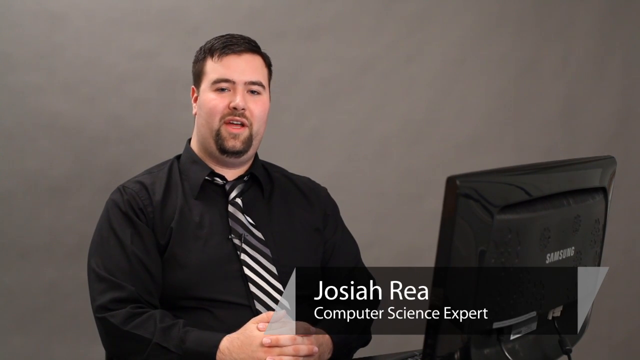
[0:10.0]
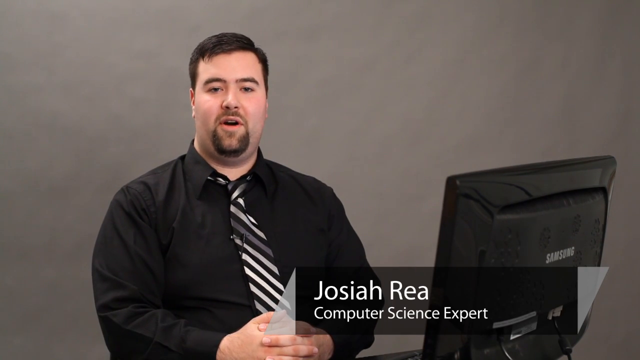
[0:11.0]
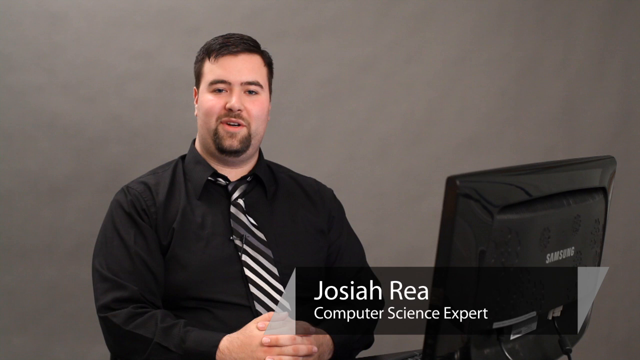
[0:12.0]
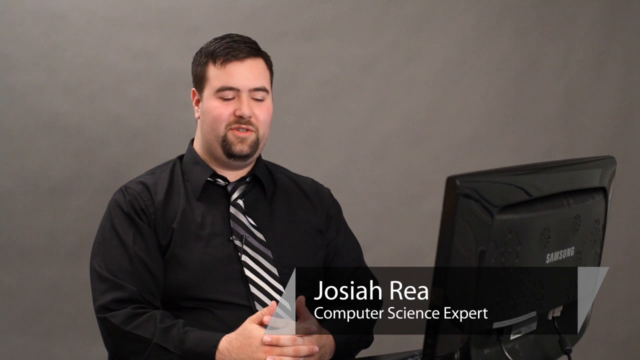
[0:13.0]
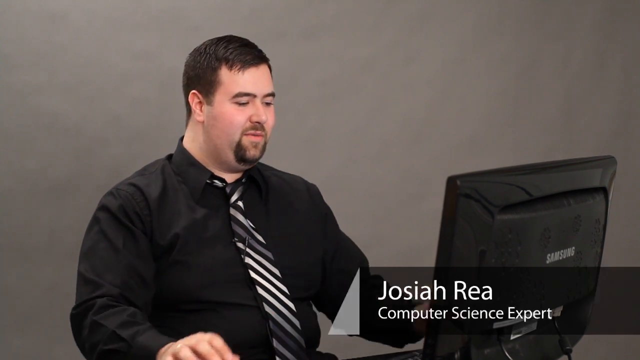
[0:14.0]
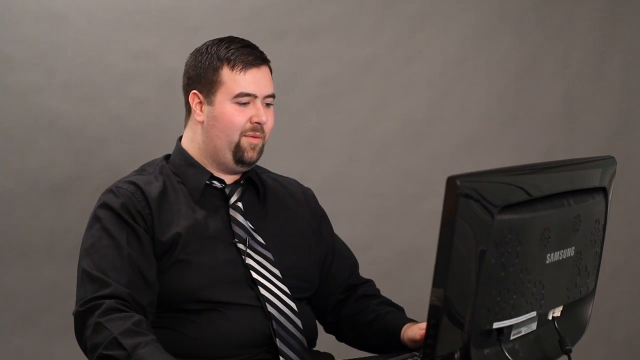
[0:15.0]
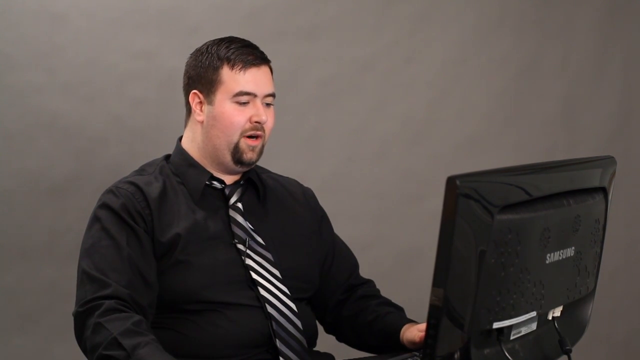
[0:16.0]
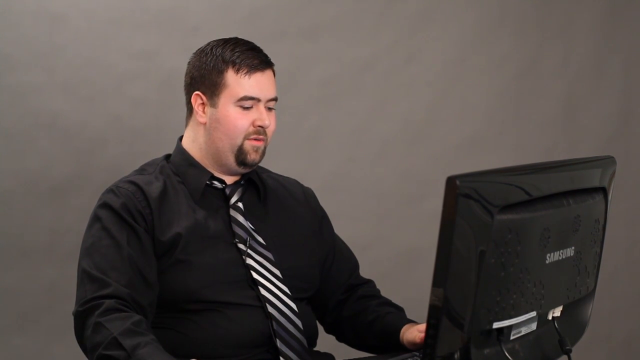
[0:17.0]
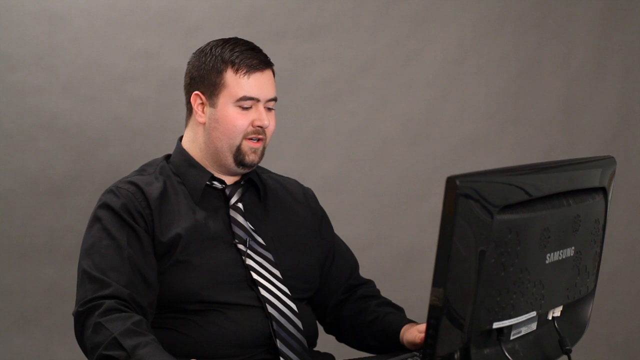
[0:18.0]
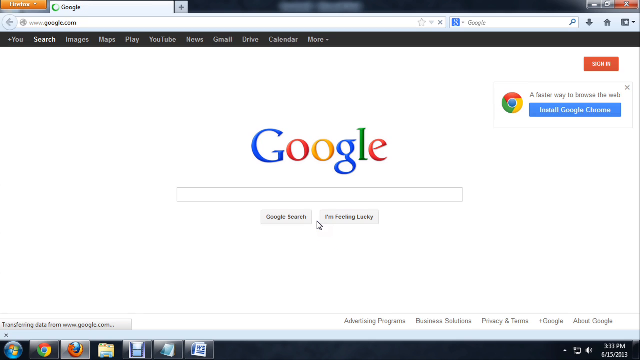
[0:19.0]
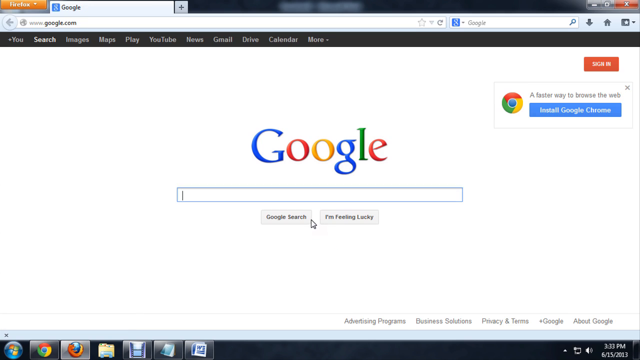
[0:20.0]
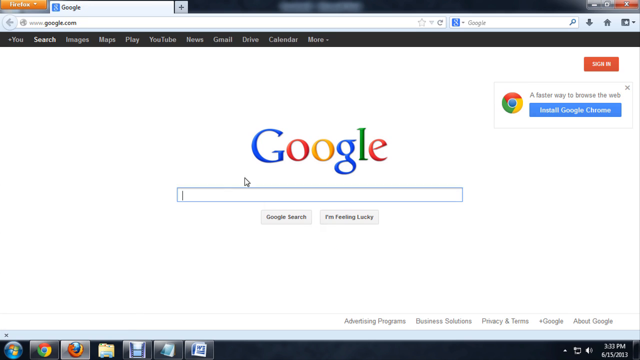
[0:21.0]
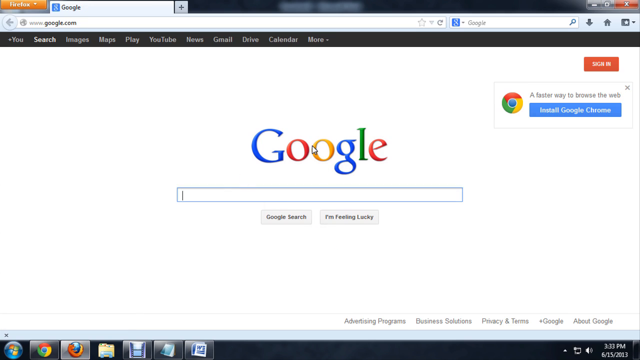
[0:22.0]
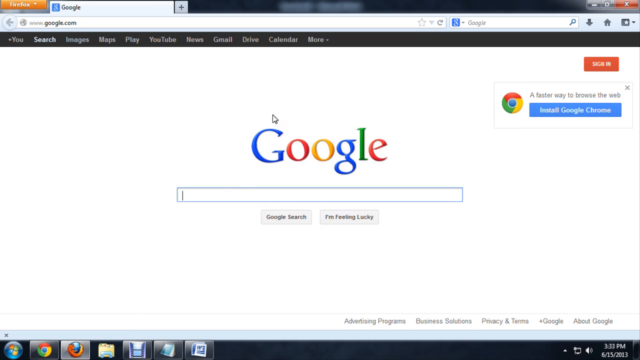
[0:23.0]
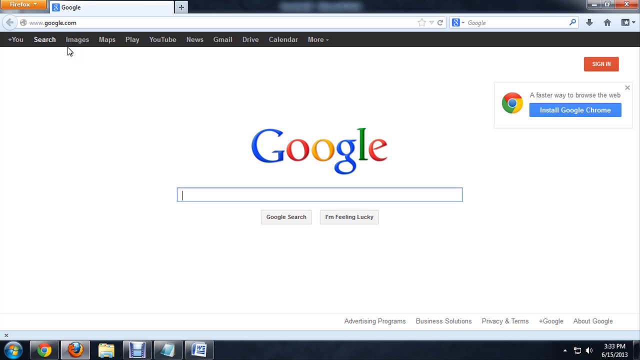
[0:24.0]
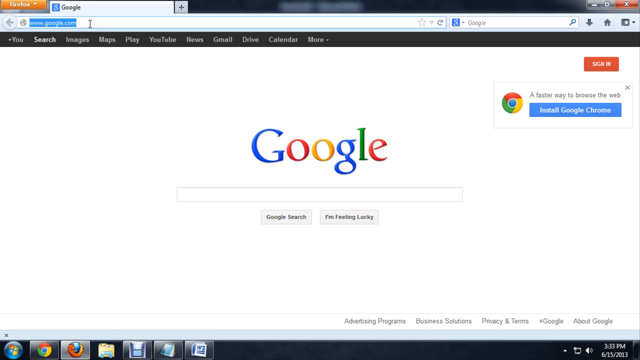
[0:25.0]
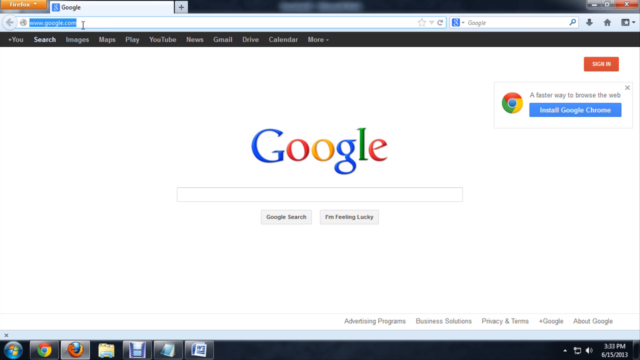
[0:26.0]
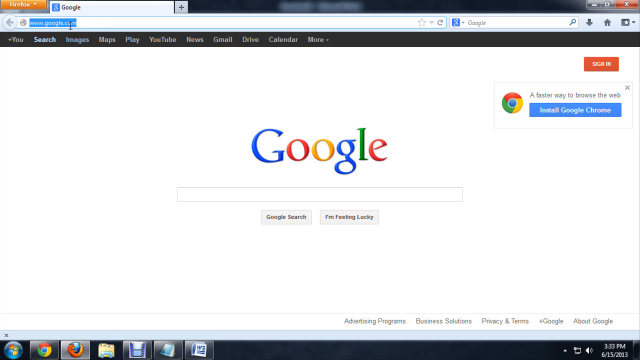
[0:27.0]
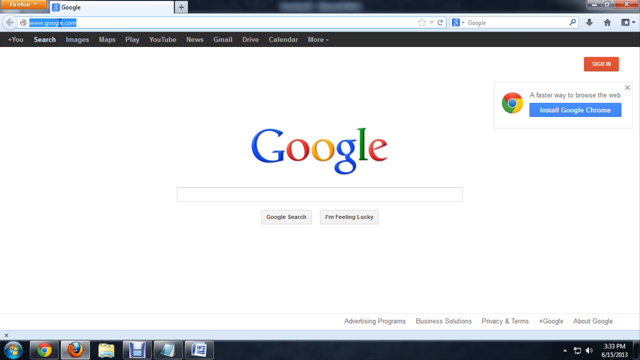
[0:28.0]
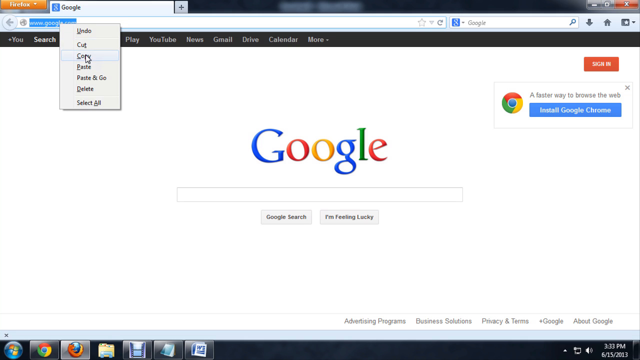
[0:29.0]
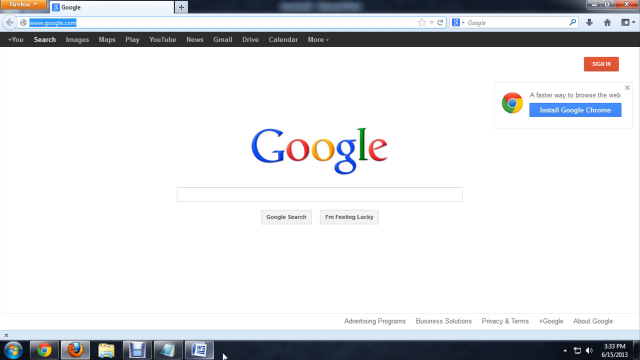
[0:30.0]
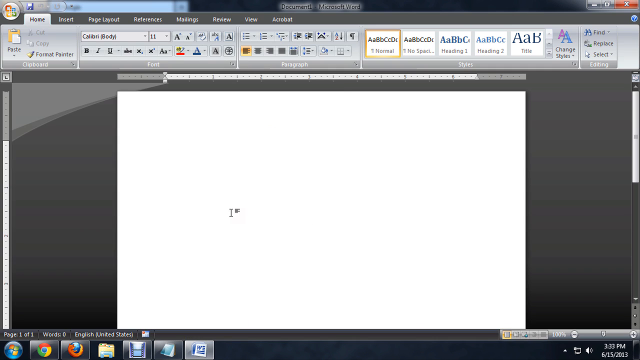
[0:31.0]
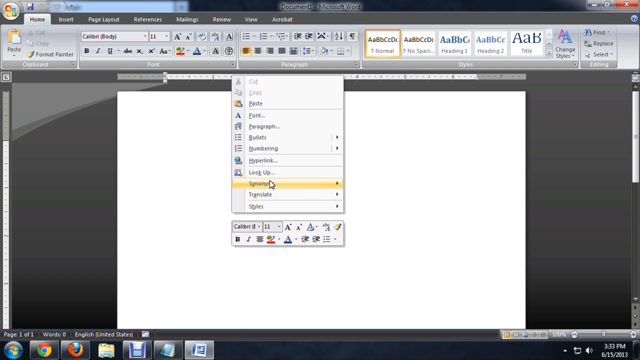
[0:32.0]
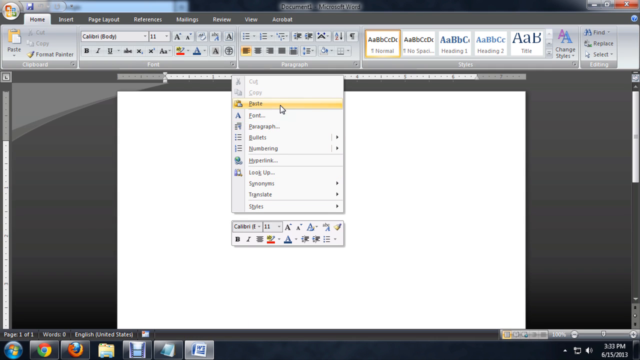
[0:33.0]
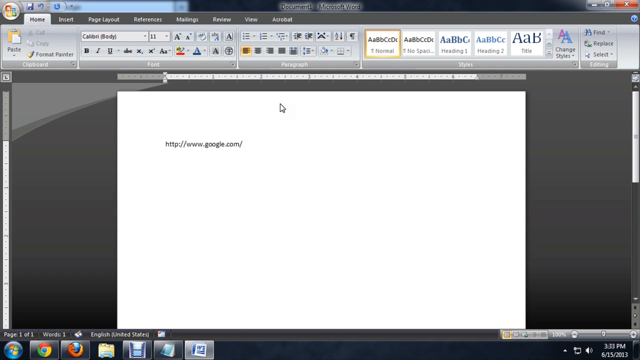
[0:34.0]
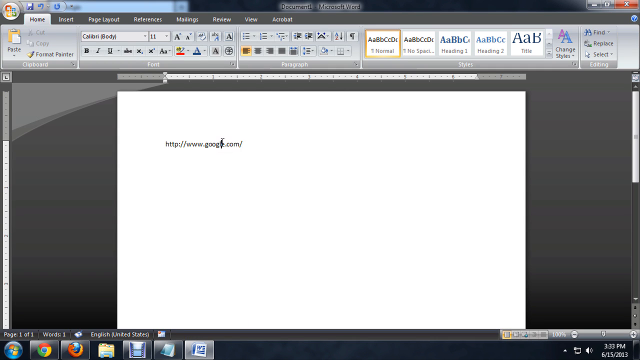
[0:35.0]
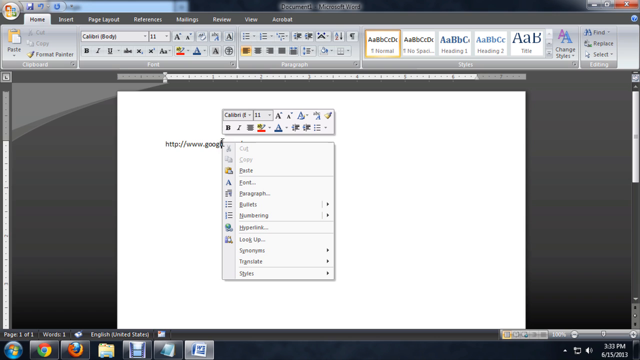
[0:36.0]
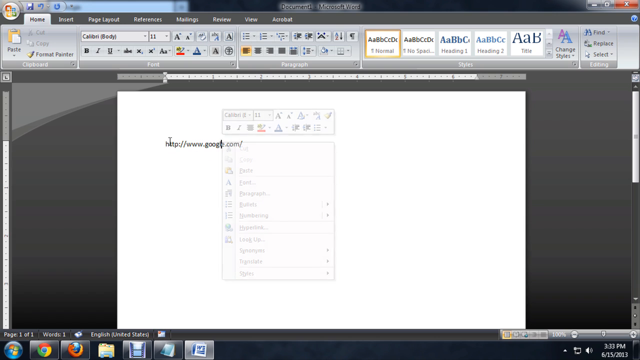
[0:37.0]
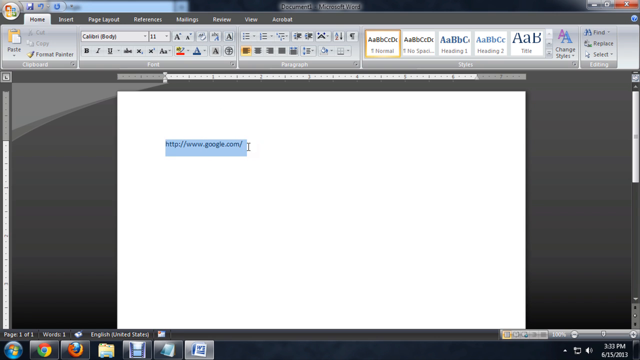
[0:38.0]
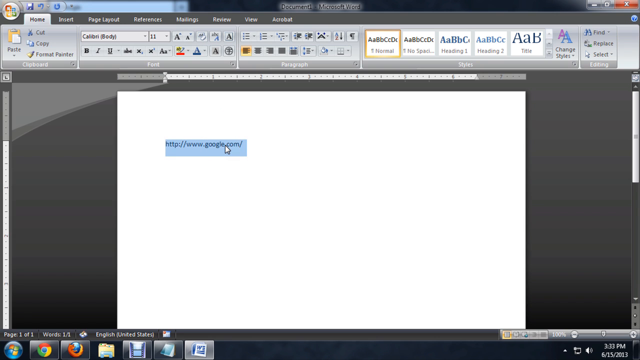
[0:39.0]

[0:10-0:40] The man keeps talking, turning toward his computer and lifting his hands in gestures as he speaks toward his screen. His name and the computer science expert title disappear from the bottom right. He talks toward his computer and uses it. The view then changes to a Google page on the computer, and he is no longer visible. He moves the cursor around the Google logo, encircling it, then moves it up to the search bar at the top left of the screen. He highlights the Google website address and copies it to his clipboard. He opens a Word document from the bottom of his computer screen, right-clicks, and pastes the Google link into the document. He then highlights the link in the Word document and right-clicks it.